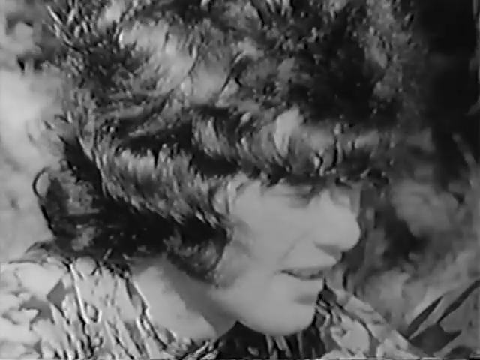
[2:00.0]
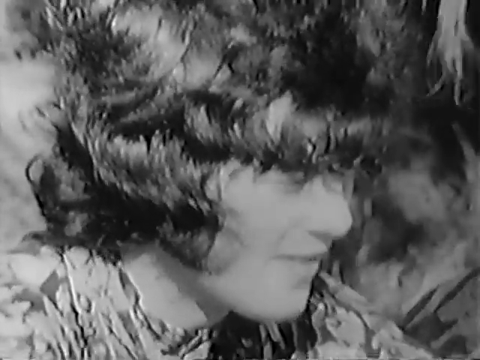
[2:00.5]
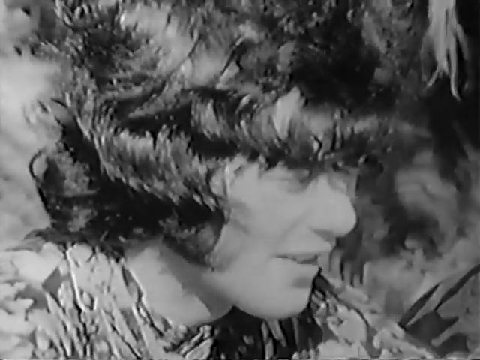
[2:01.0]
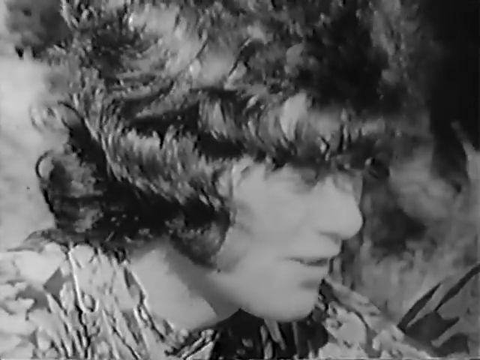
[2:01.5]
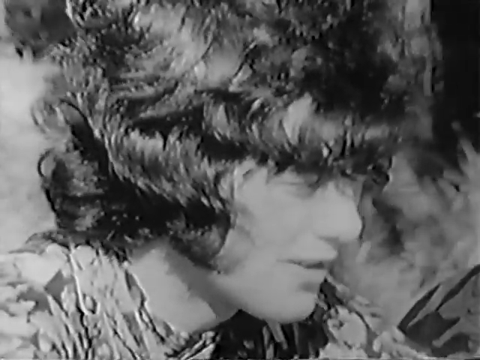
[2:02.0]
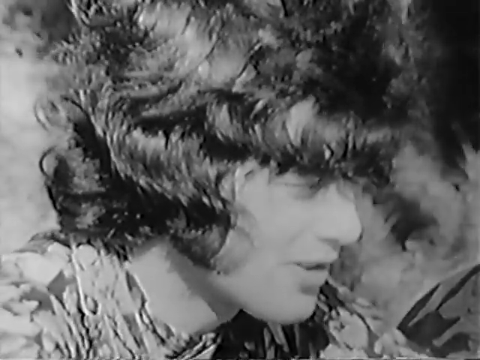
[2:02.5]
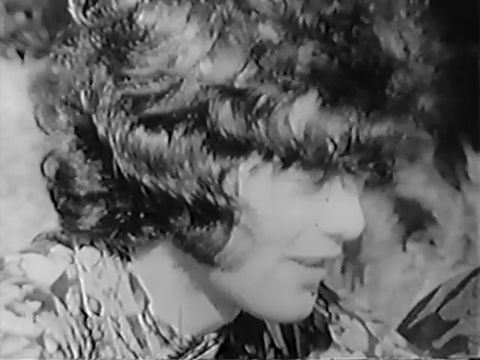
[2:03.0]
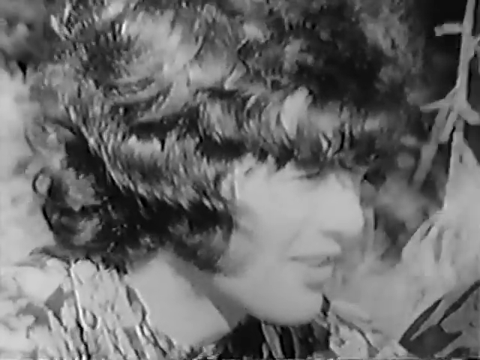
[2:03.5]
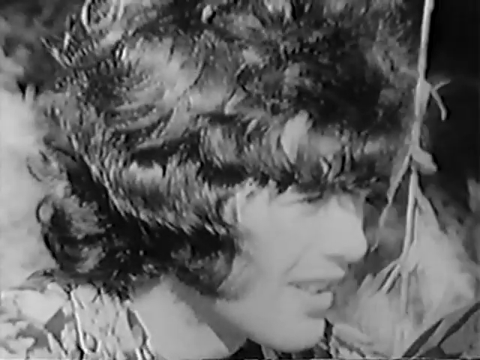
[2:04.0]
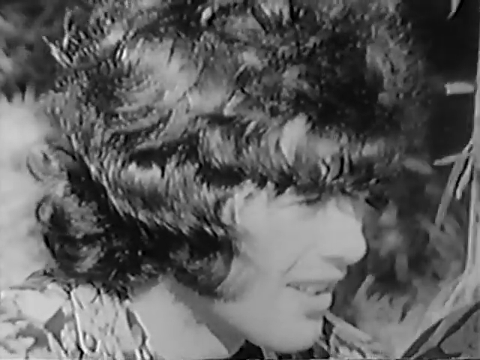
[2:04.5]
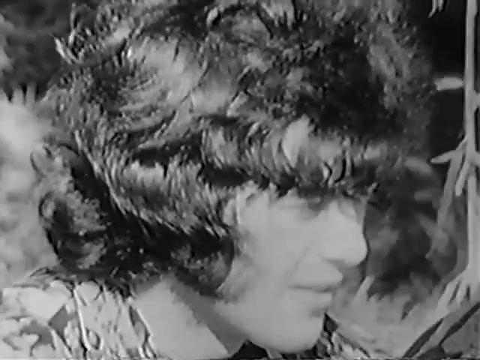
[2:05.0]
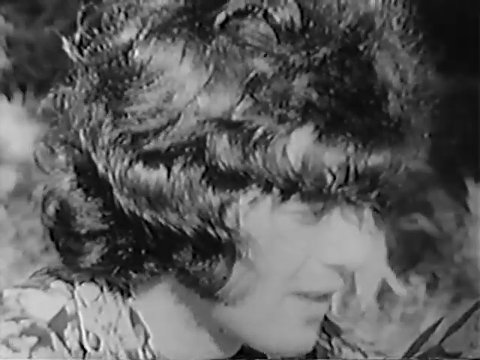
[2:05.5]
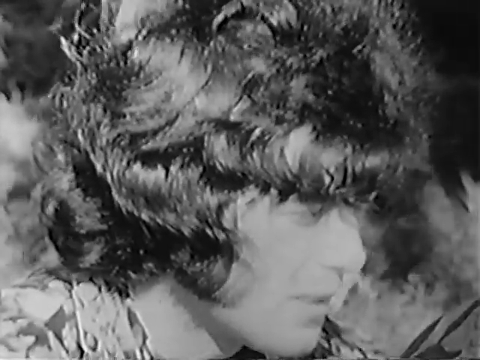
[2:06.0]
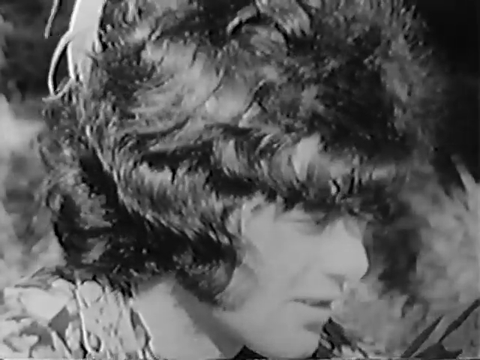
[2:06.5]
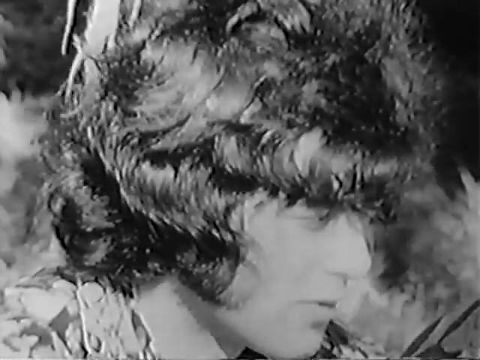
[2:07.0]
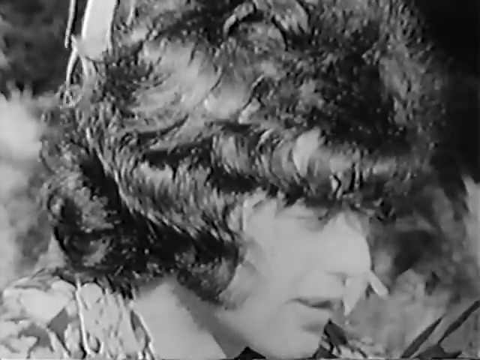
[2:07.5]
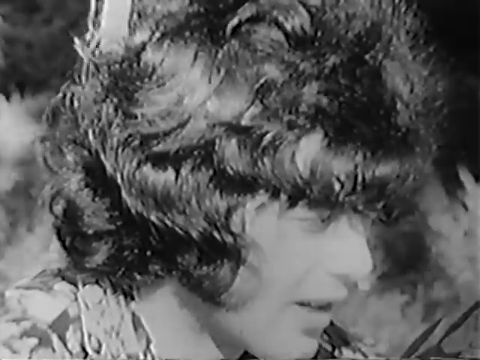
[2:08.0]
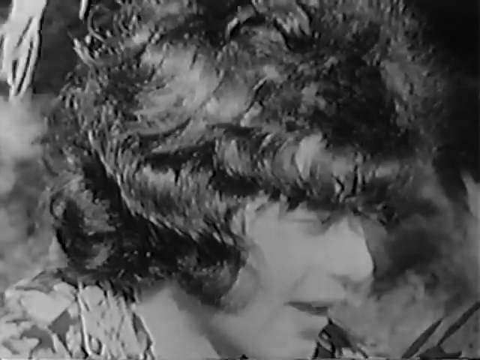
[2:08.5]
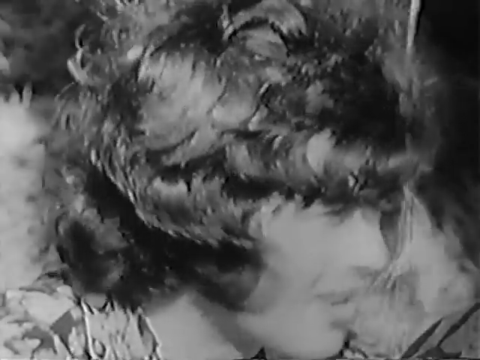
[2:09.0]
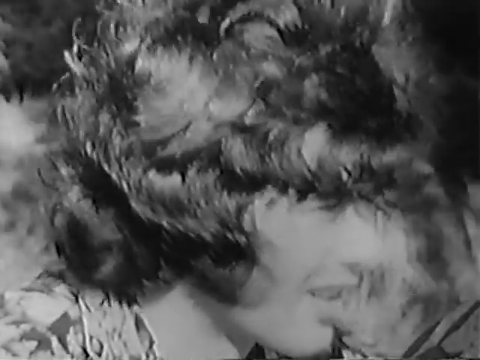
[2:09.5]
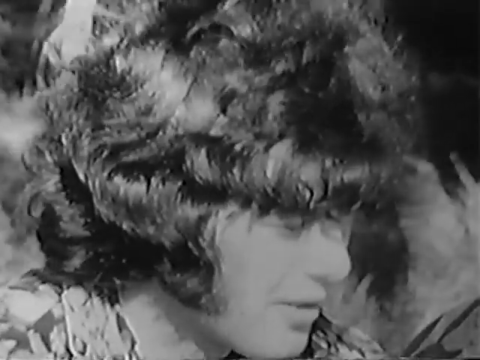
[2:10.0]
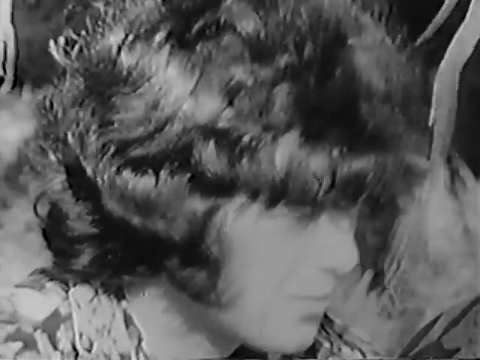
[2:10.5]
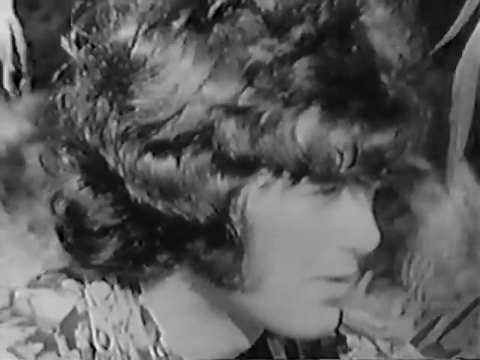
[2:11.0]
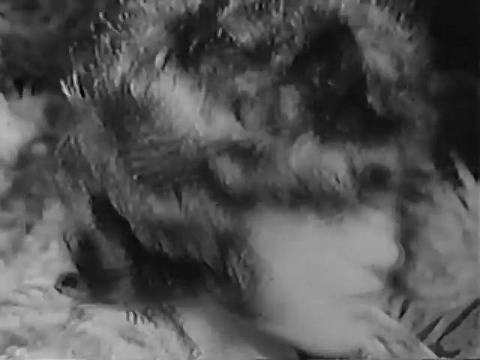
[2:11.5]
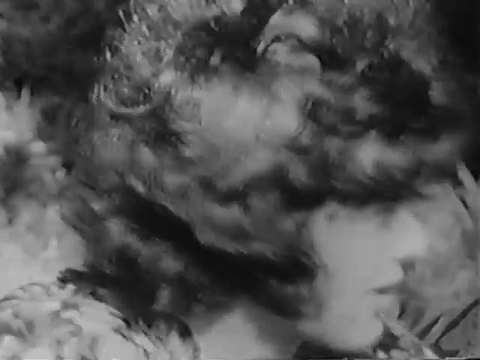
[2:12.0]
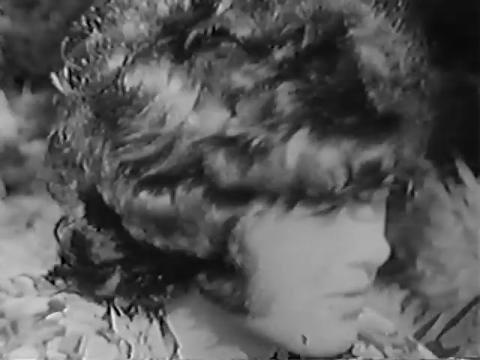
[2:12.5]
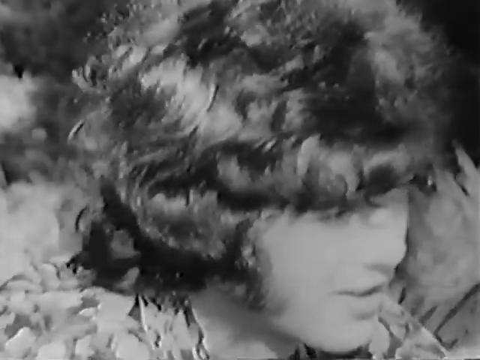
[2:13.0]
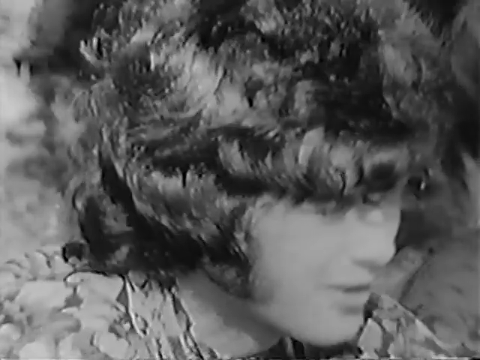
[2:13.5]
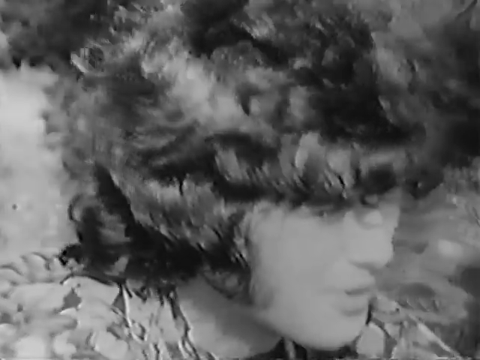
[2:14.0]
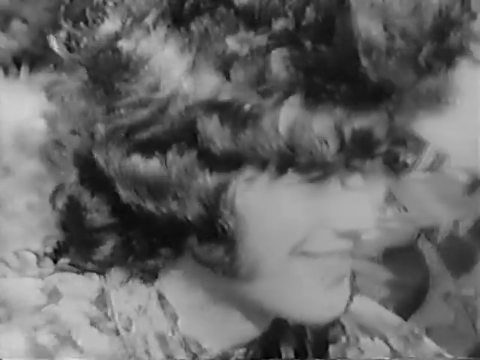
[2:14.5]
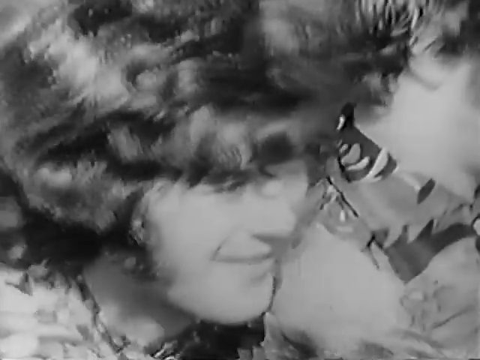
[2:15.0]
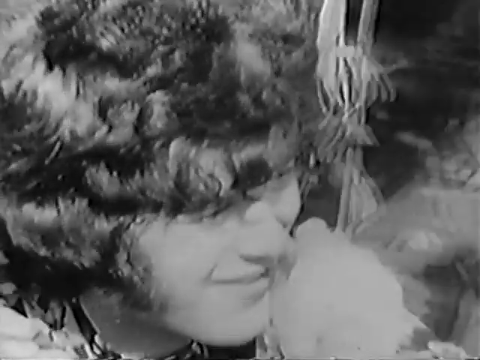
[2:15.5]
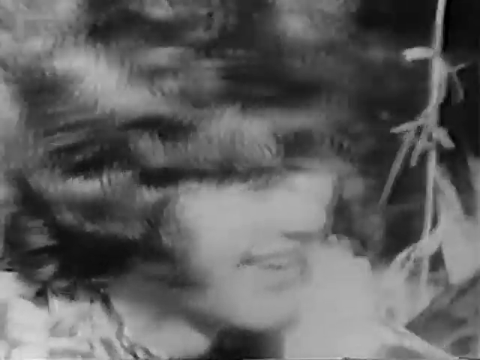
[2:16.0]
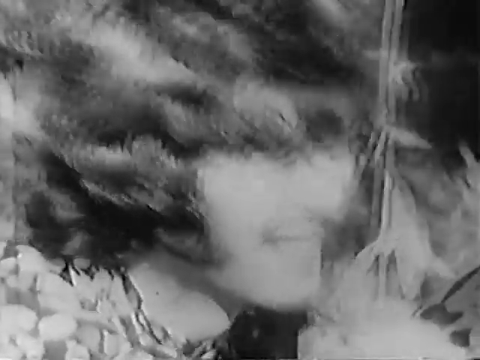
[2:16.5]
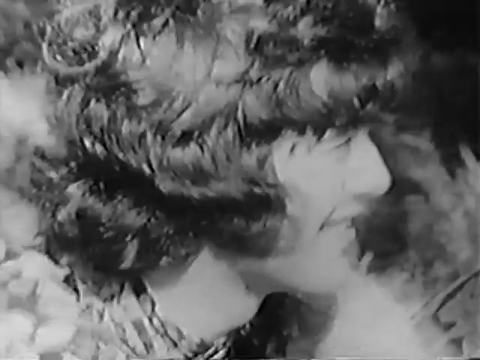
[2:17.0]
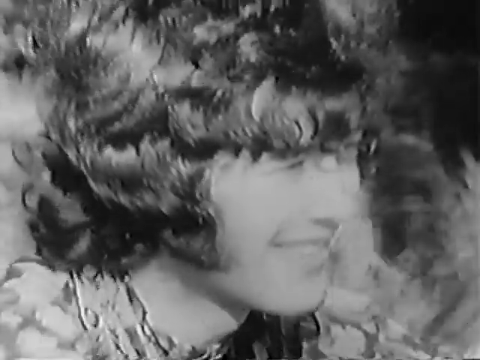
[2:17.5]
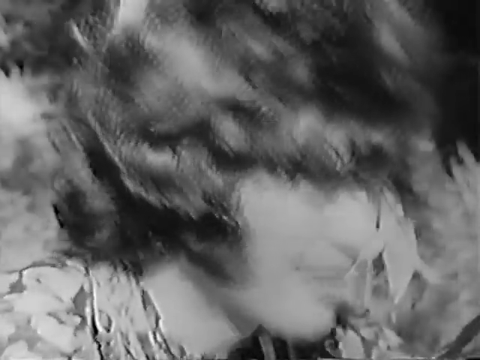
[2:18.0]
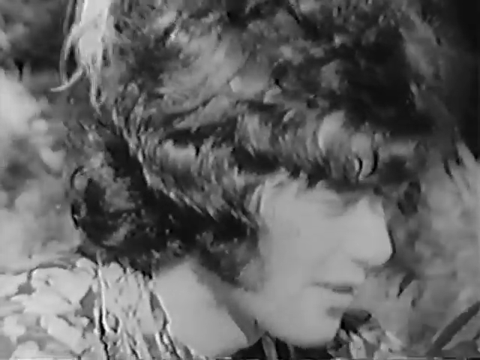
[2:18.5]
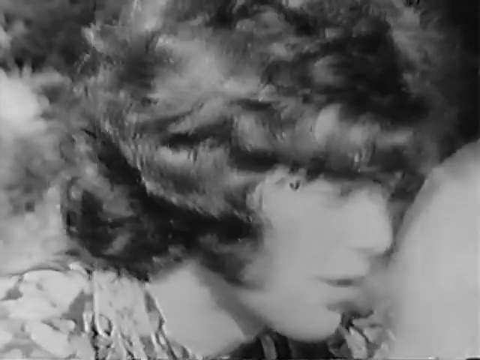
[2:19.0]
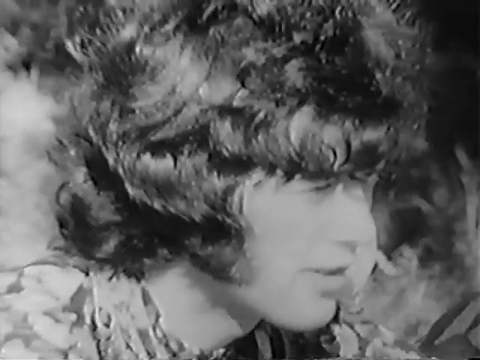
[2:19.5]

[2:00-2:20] The close-up continues on the dark, mop-haired man, with swaying, drooping branches behind him. The men are probably in their 20s. At one point his right arm comes up to his left shoulder and scratches or lightly brushes it. The extreme close-up shows mostly the right side of his face because of the way they are sitting and positioned. He is the dark-haired man sitting in the middle of the three men on the hillside, and he is talking while apparently being interviewed; the group looks like it is from around the 1960s or 70s. It looks like a pleasant day with a light breeze, with lots of grass blowing in the background and weeping willow branches. He is Caucasian, as they all are. The ones in patterned shirts, like him, wear patterns typical of the 60s or 70s, in the trendy style of that time.